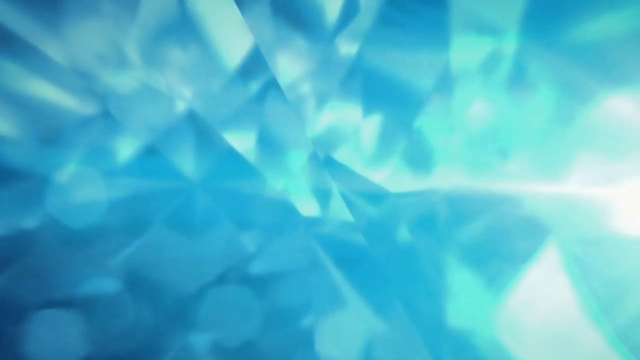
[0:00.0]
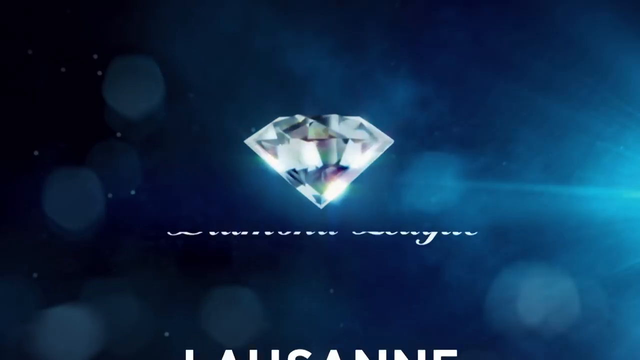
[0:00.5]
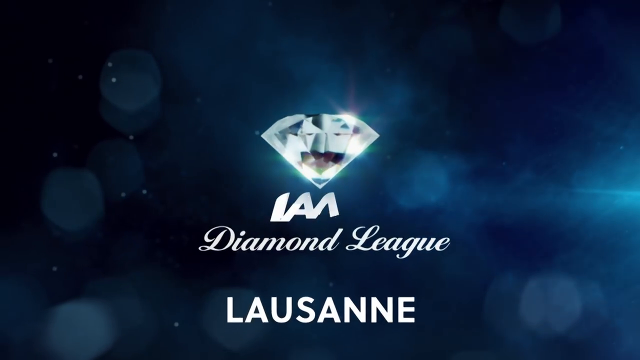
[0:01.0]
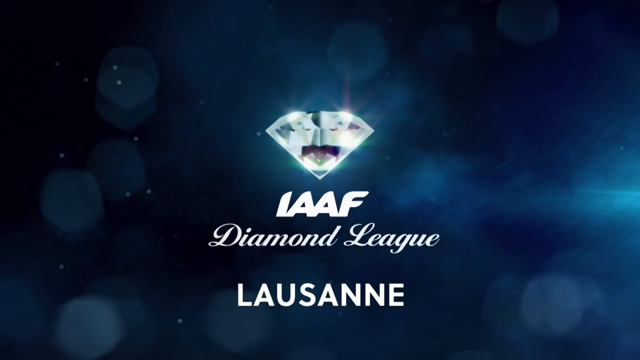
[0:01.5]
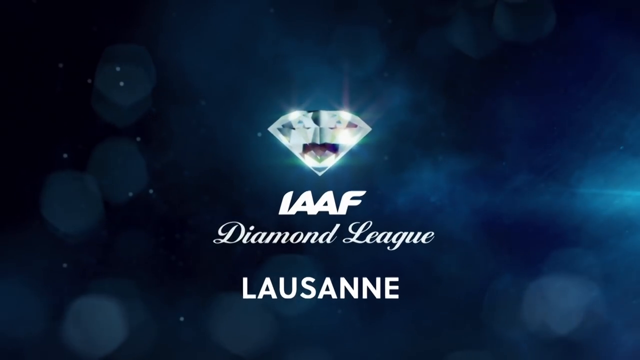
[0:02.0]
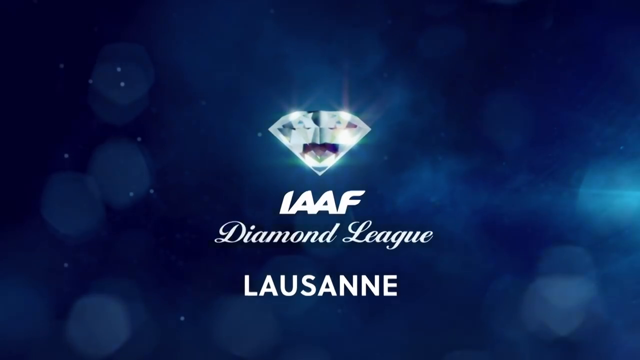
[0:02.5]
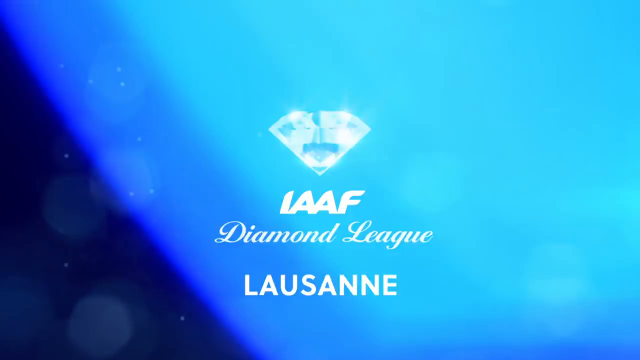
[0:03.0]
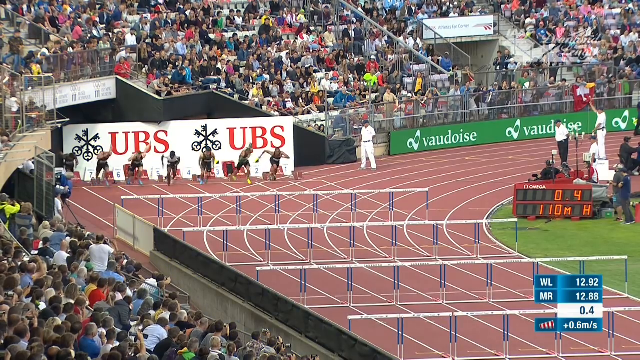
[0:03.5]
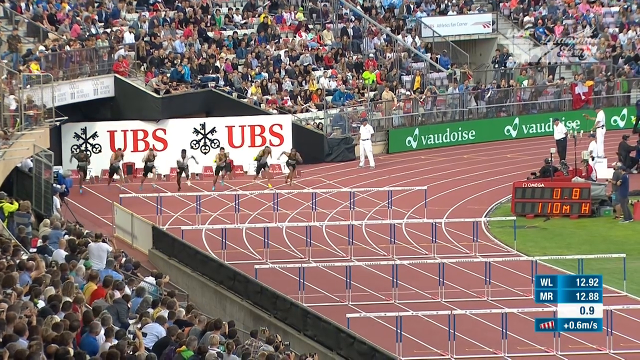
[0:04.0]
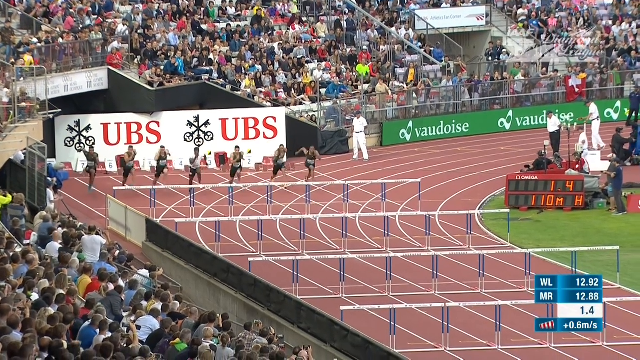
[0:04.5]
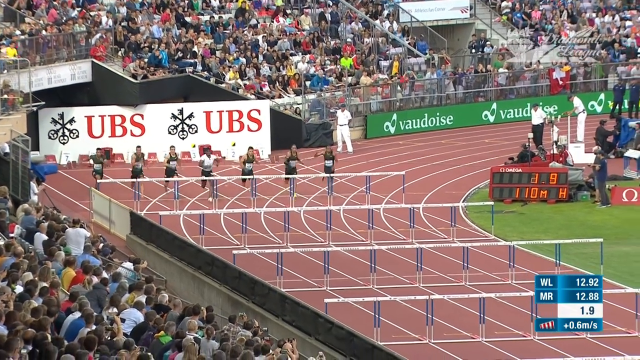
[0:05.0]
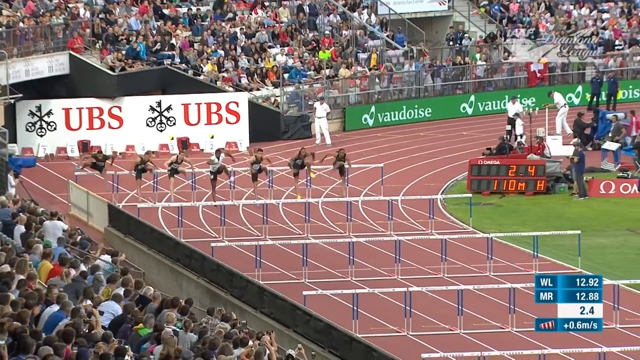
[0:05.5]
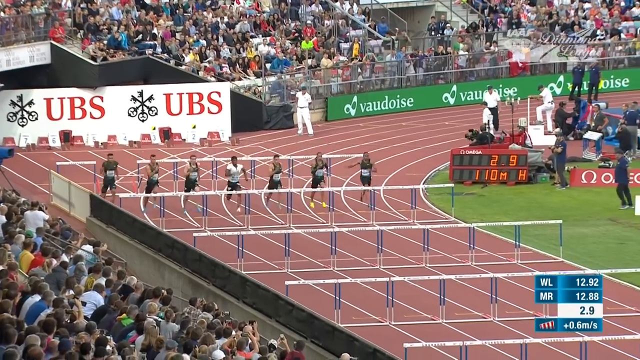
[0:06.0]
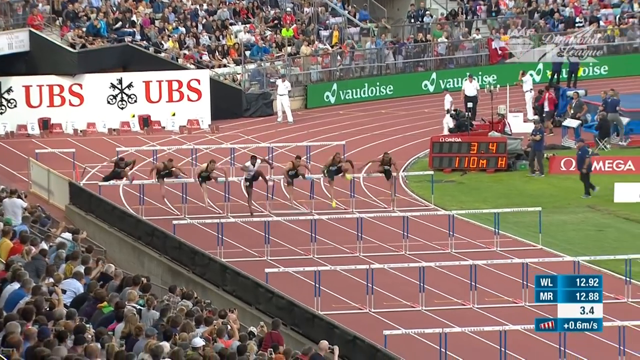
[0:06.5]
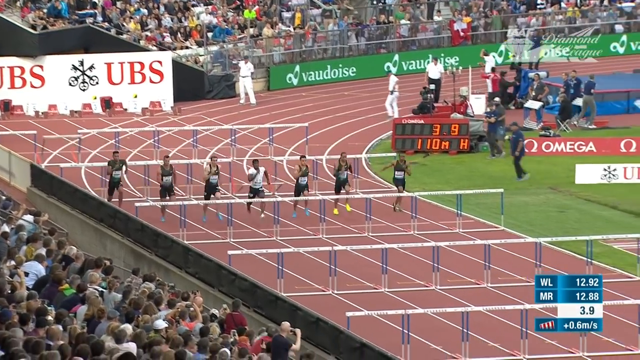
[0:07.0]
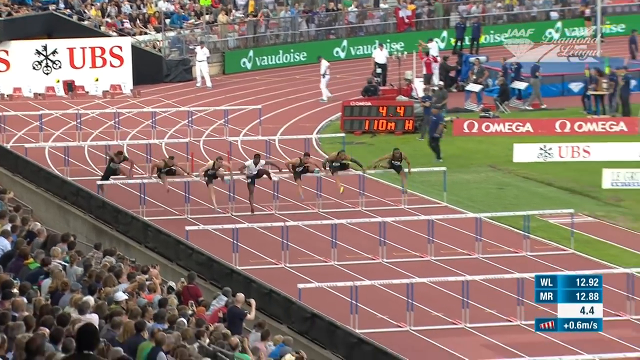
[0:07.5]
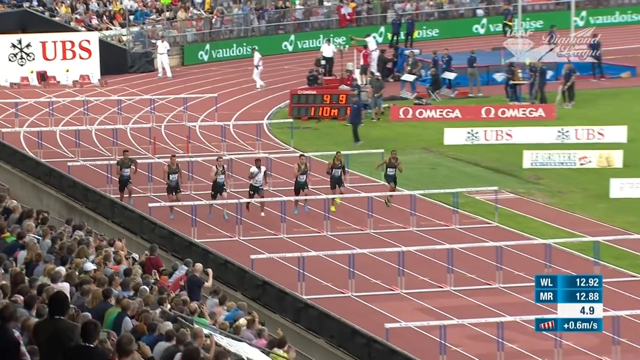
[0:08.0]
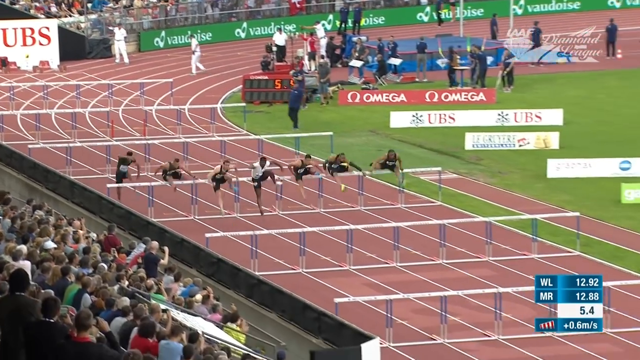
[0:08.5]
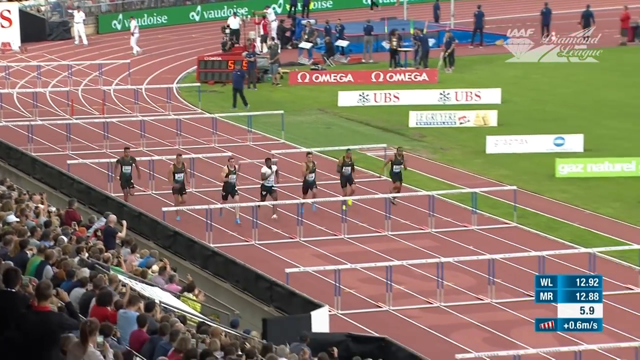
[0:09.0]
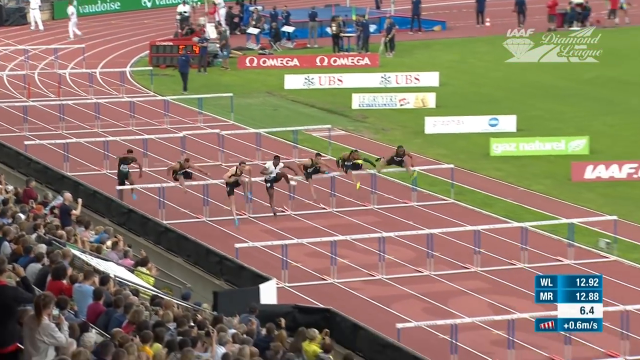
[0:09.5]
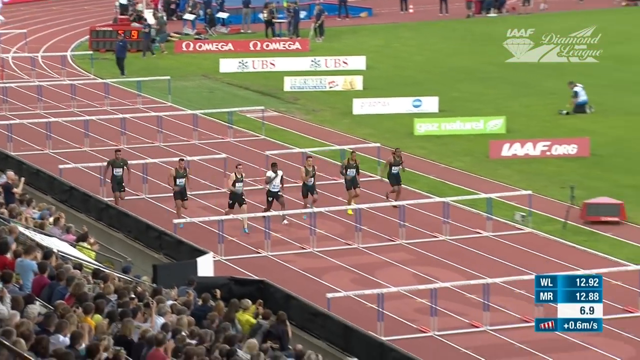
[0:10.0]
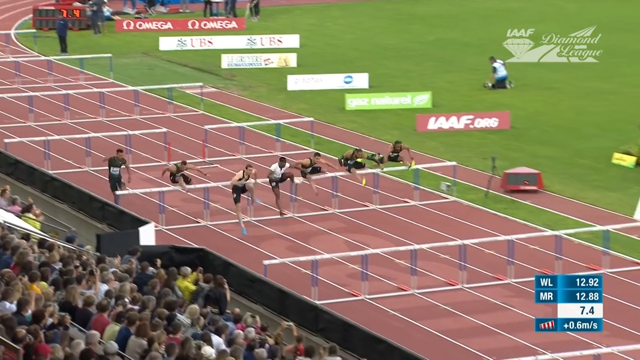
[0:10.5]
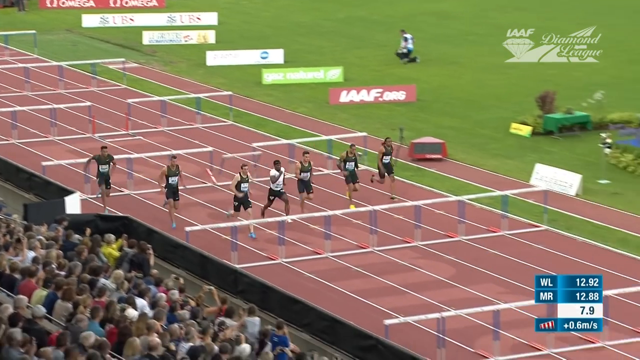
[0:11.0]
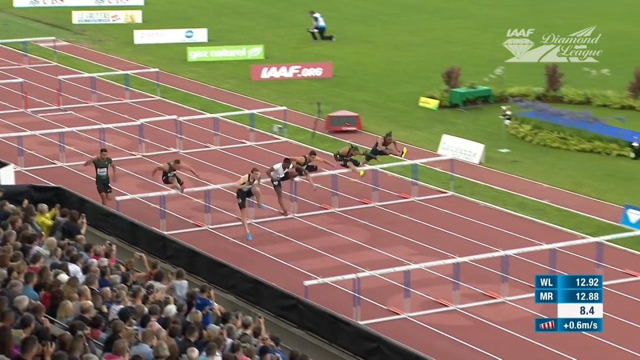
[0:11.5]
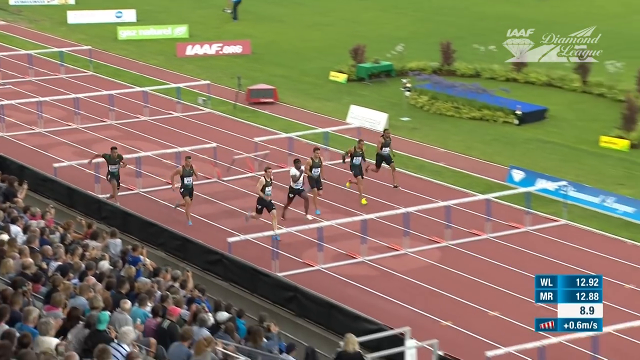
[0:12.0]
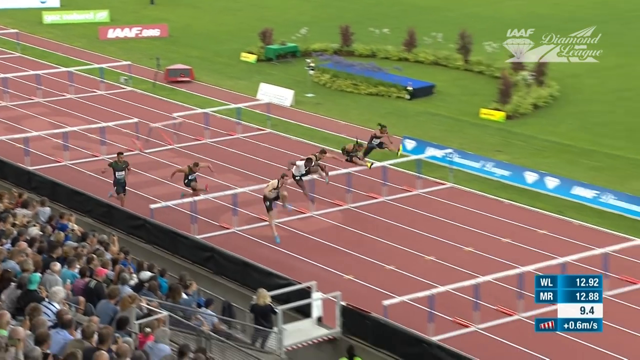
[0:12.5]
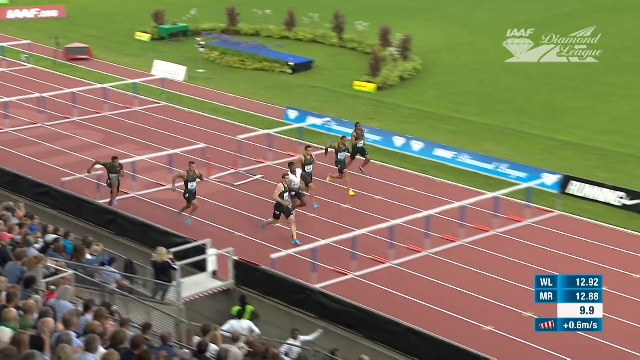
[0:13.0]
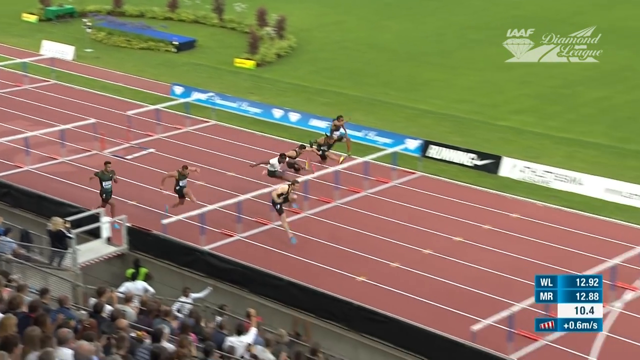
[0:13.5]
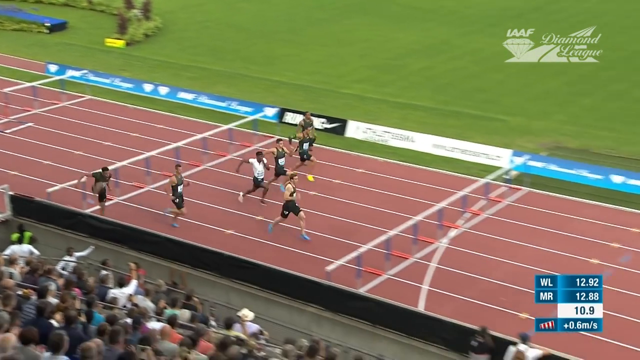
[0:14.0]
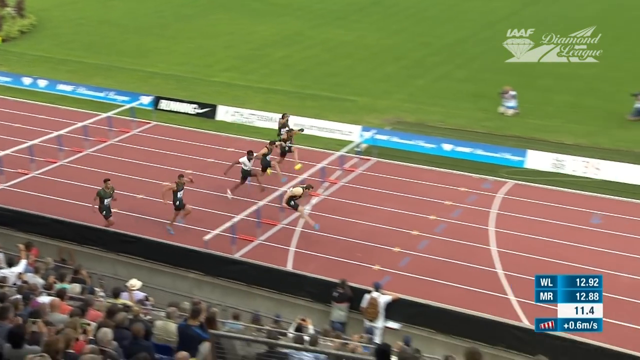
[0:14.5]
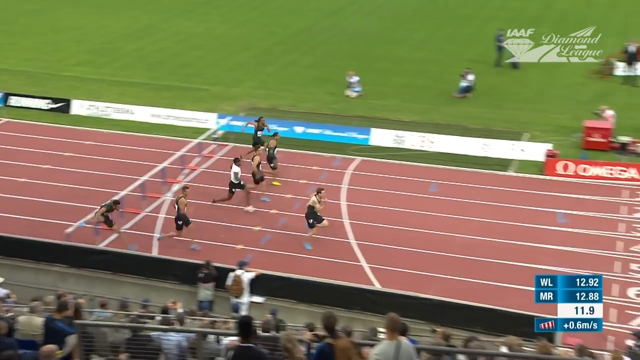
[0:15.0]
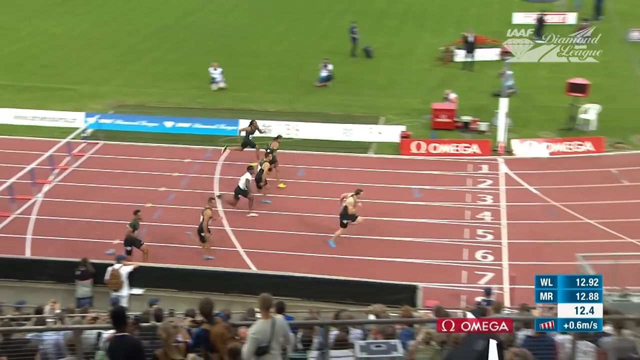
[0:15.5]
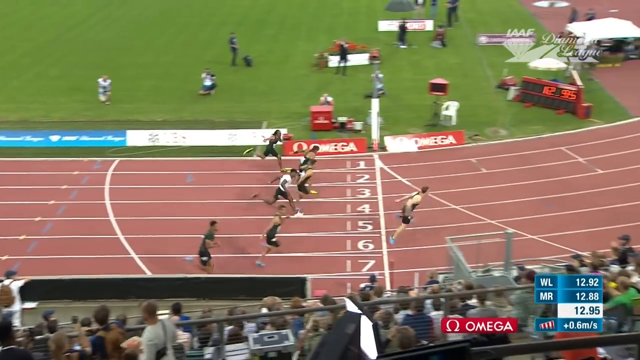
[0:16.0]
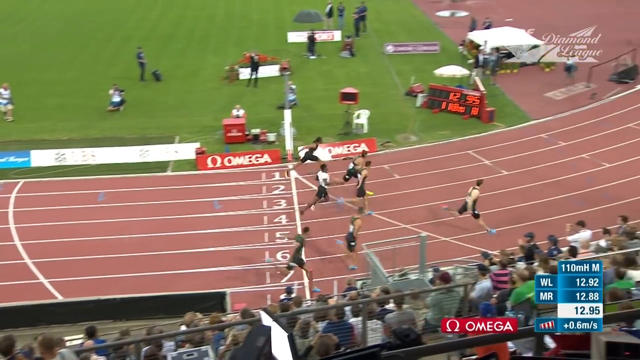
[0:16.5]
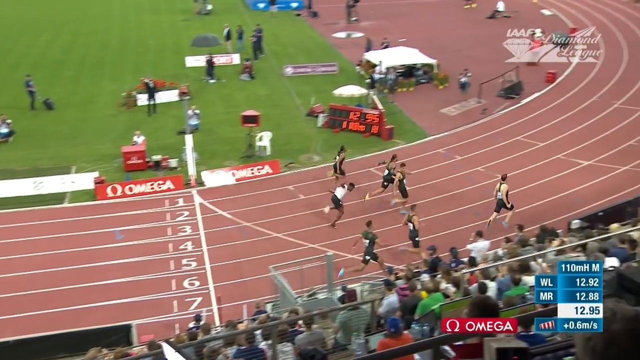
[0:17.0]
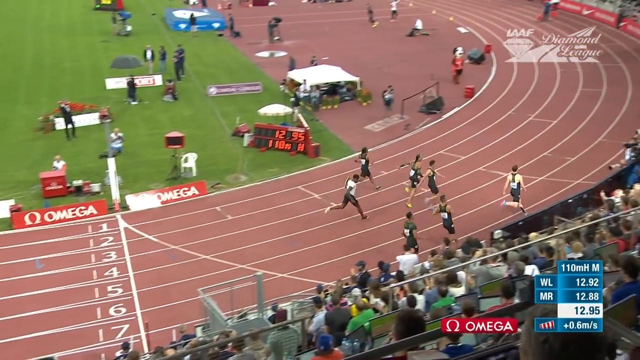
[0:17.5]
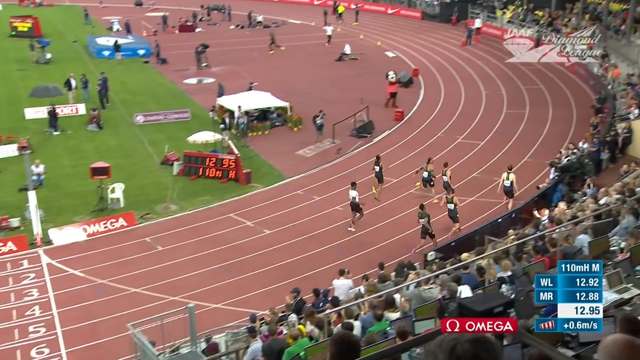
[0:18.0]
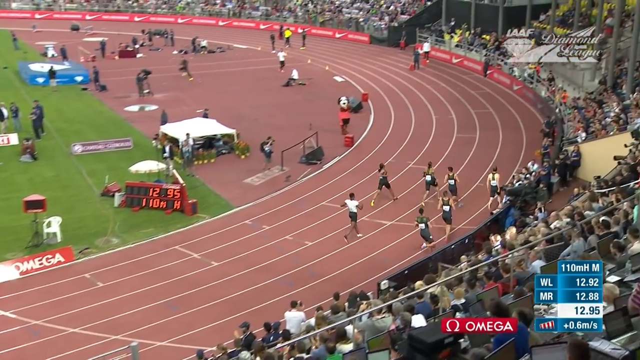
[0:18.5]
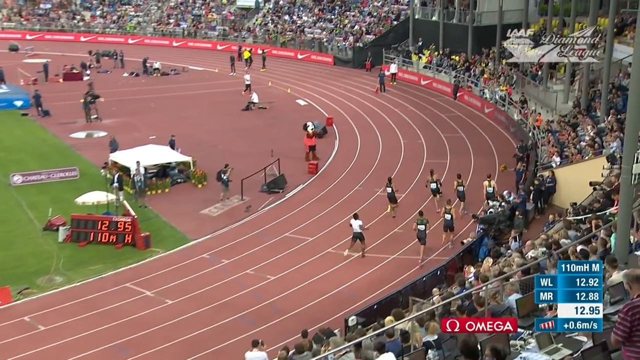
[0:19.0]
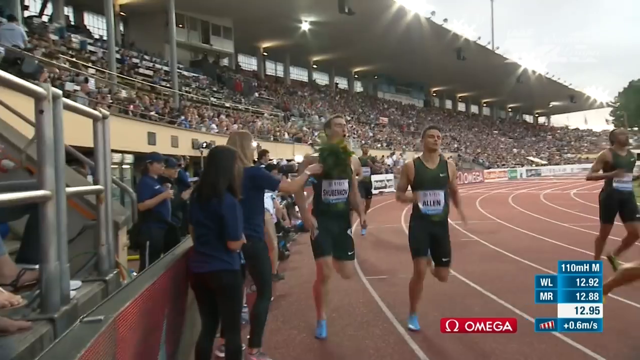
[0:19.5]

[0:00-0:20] Seven people are running, wearing orange, green and white clothes. Many people are watching the game. The runners appear to be roughly 18 to 40 years old. There is blue sand, red sand and white sand. Many people are wearing black, white and red t-shirts. The grass is green, and the weather seems very warm and clear. The event takes place on the ground, and the setting does not change.